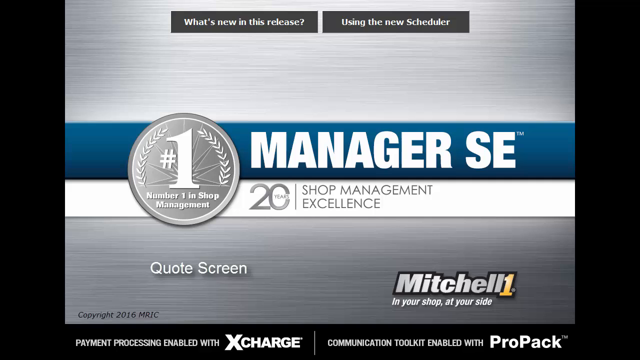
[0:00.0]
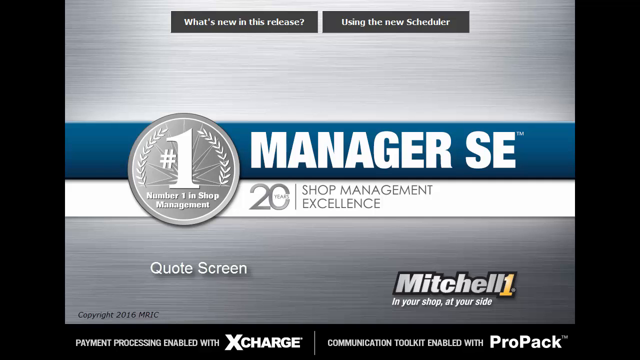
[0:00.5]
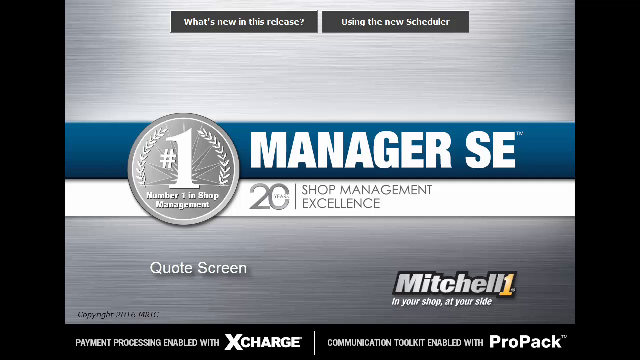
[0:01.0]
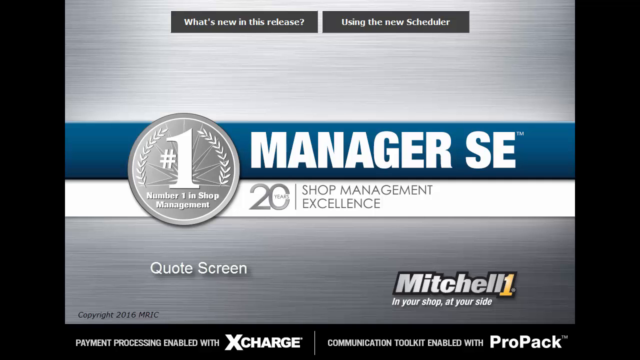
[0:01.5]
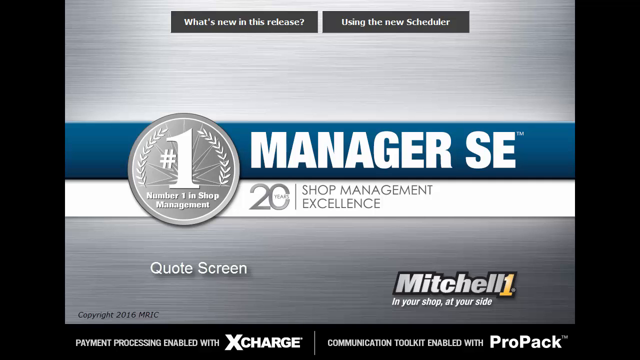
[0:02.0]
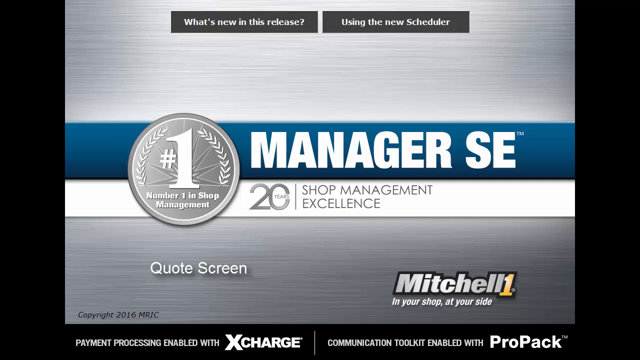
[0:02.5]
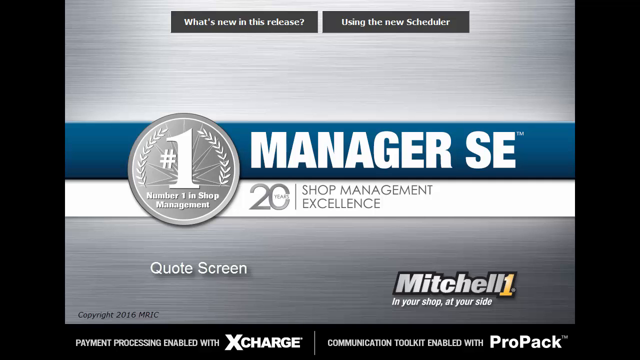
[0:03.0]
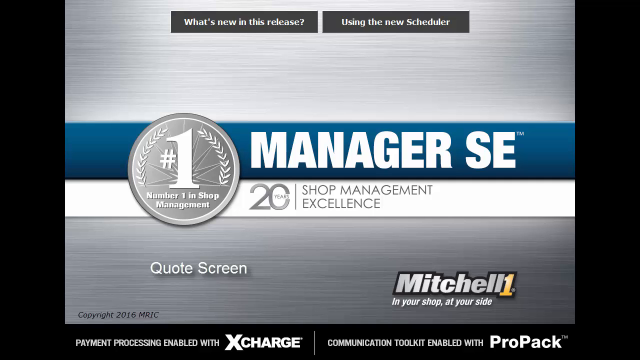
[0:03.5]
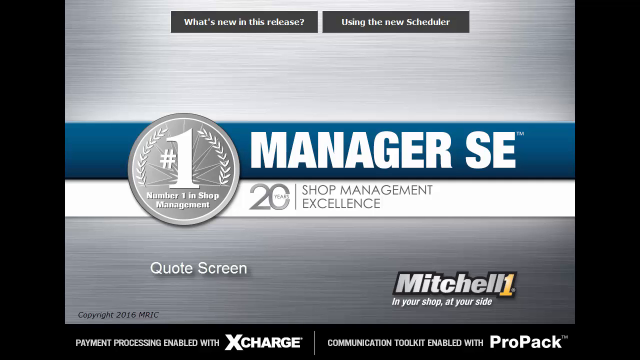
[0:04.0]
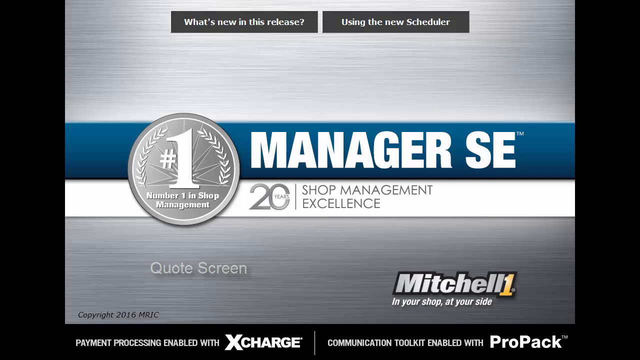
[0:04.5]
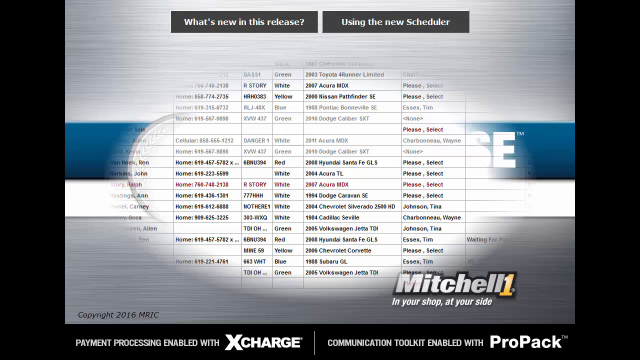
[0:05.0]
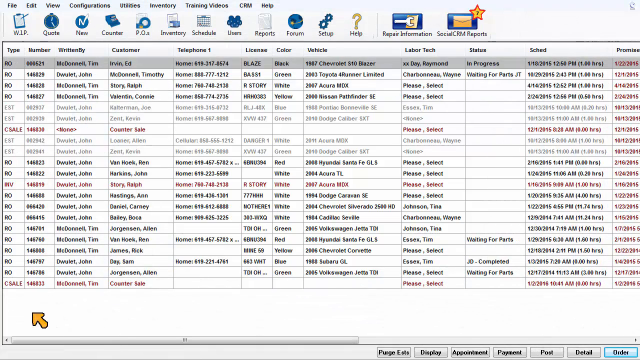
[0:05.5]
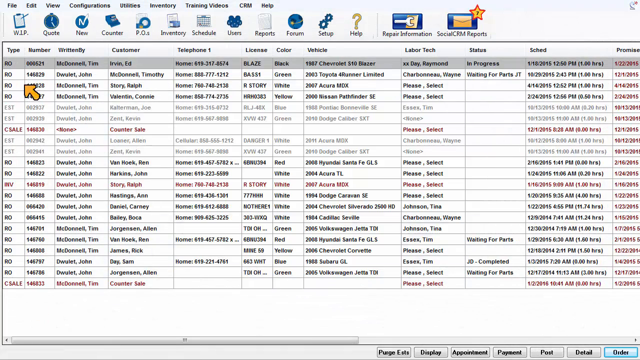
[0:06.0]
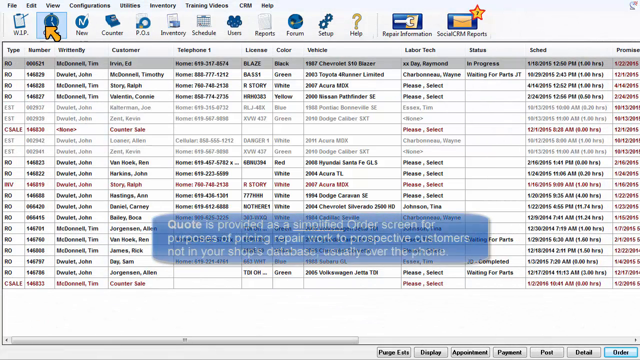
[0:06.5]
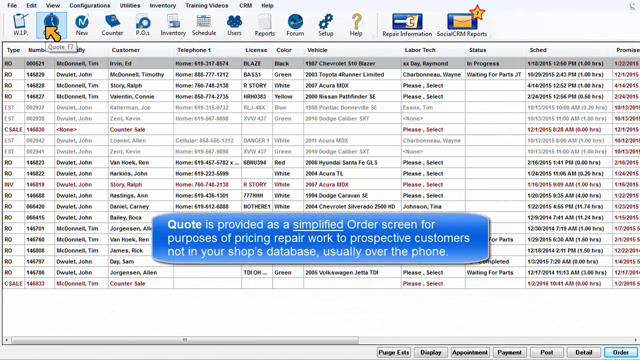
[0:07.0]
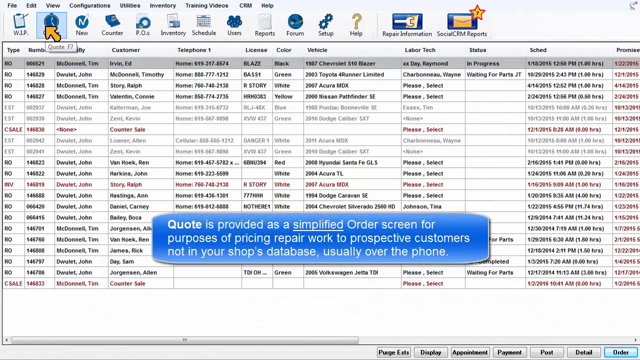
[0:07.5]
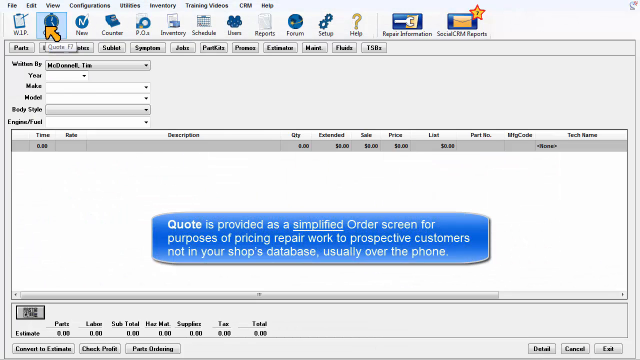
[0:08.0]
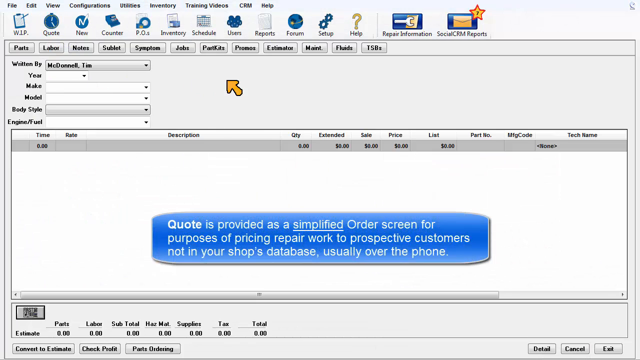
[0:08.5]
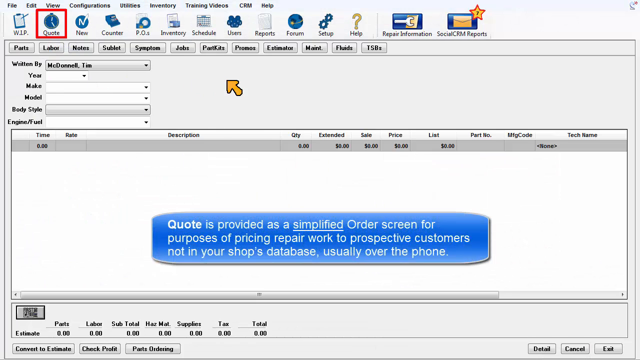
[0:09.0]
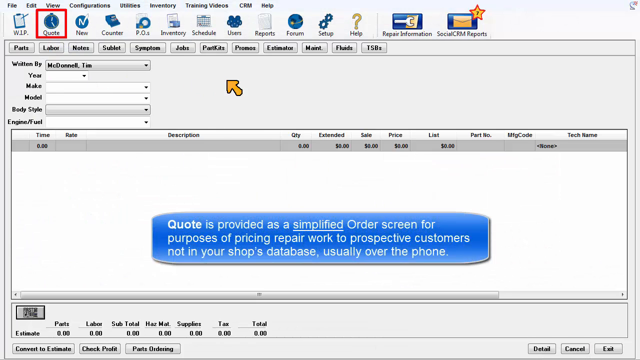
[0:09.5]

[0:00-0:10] On screen is text reading "Manager SE, Shop Management Excellence," with the number 20 at the bottom. A silver number one appears toward the lower left of the image. There is a black stripe that is blue in the center, and text at the top reads "what's new in this release?" as well as "using the new scheduler." At the bottom is "Mitchell" with a gold number one, and text at the bottom reads "quote screen." The silver number one medal carries white text reading "number one in shop management."